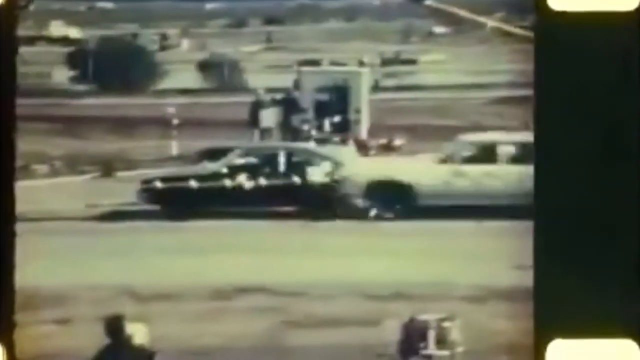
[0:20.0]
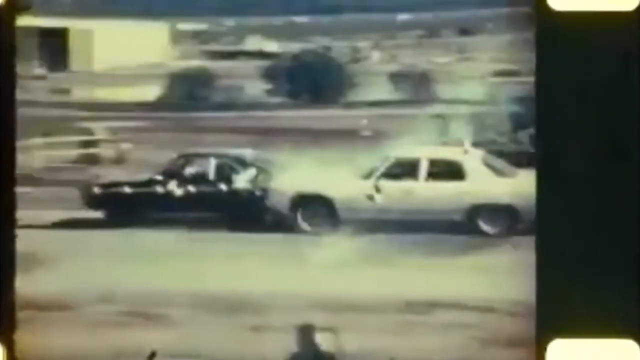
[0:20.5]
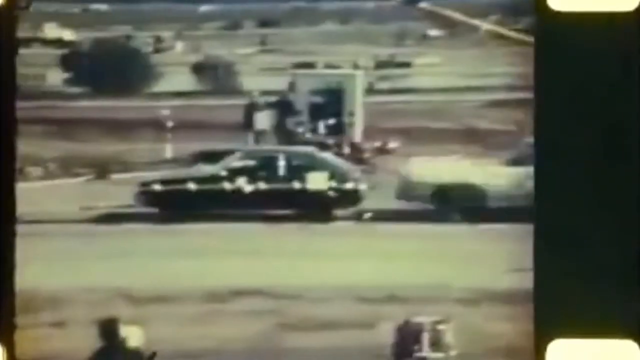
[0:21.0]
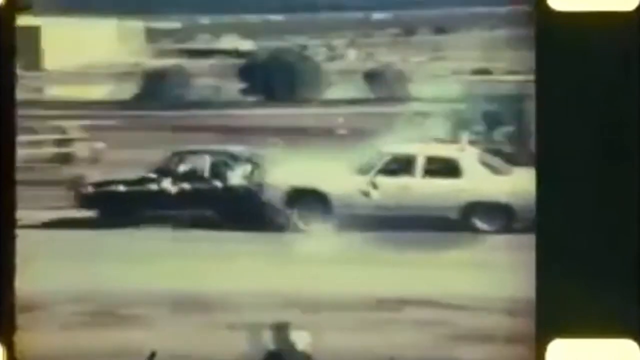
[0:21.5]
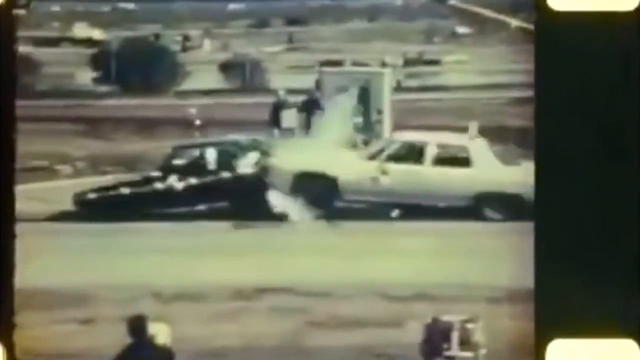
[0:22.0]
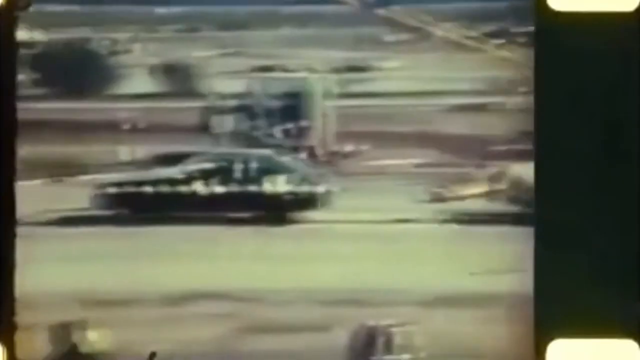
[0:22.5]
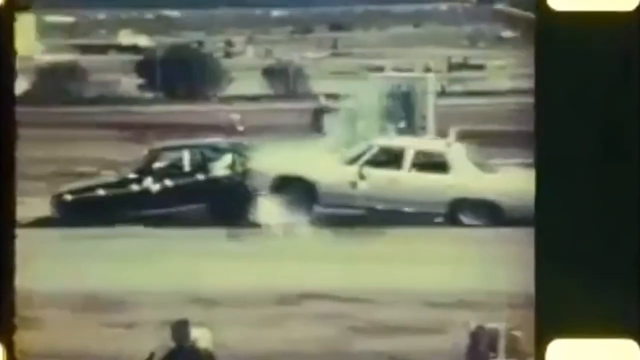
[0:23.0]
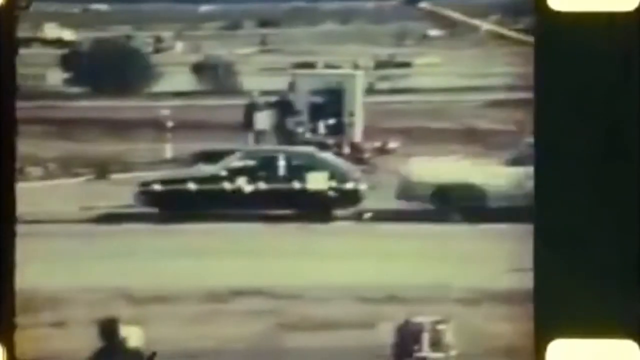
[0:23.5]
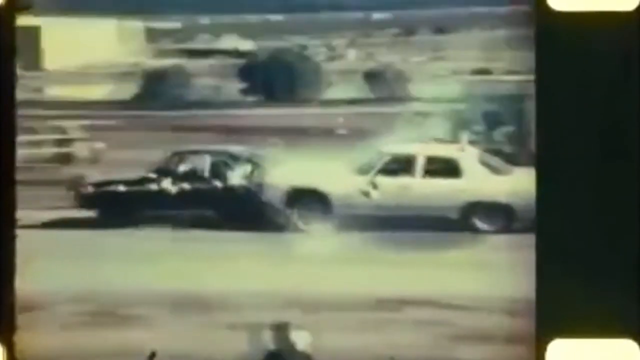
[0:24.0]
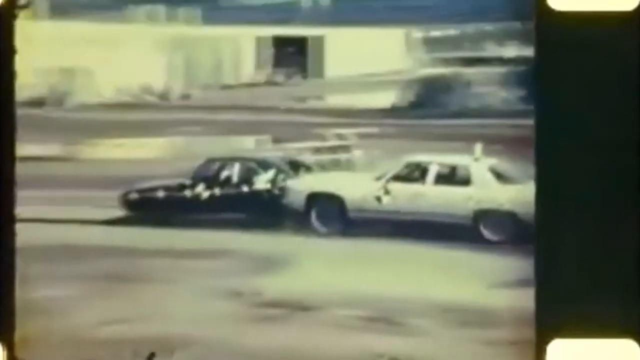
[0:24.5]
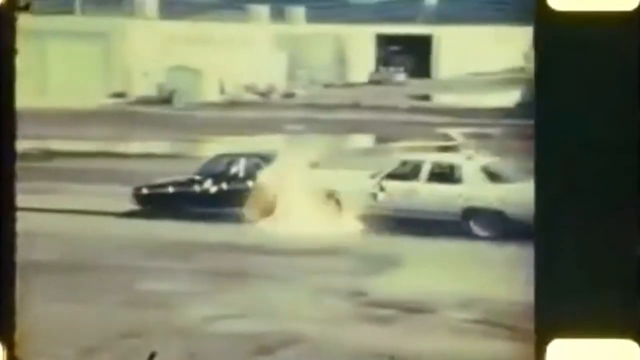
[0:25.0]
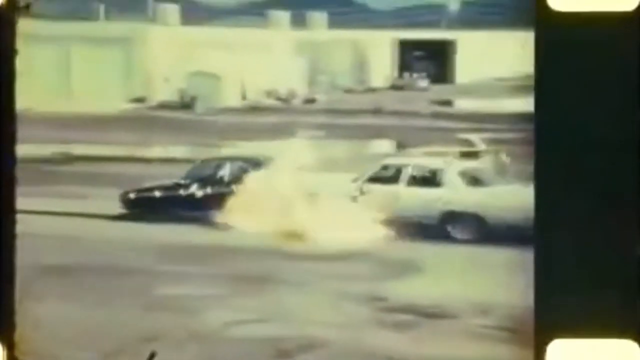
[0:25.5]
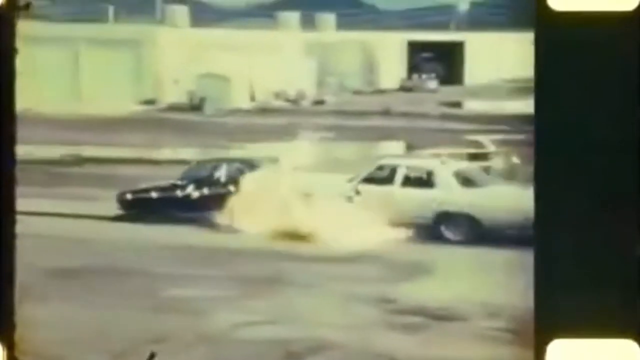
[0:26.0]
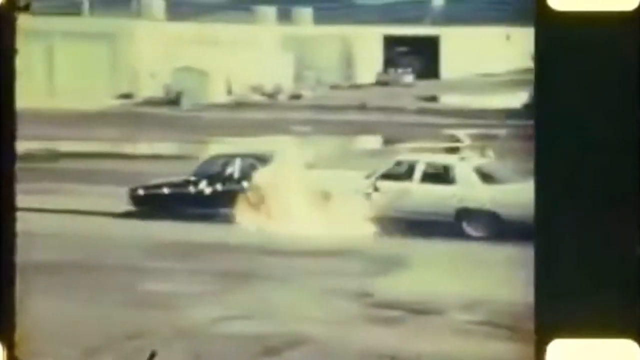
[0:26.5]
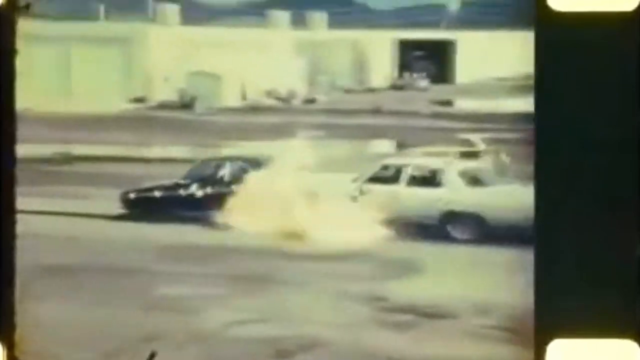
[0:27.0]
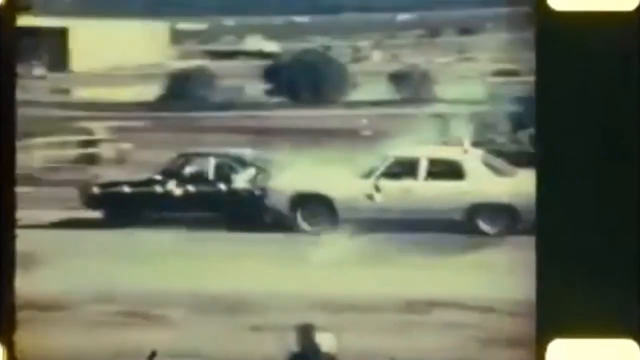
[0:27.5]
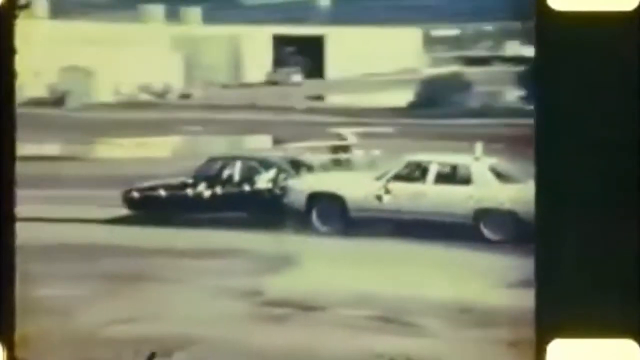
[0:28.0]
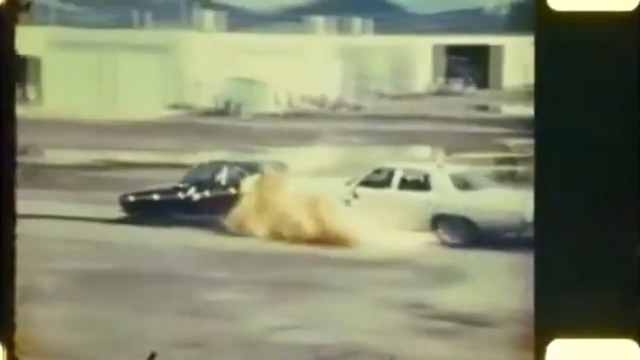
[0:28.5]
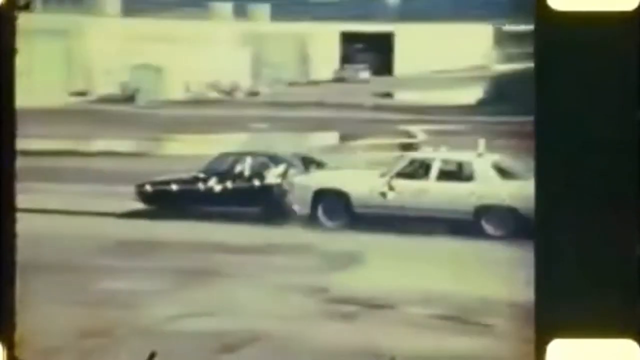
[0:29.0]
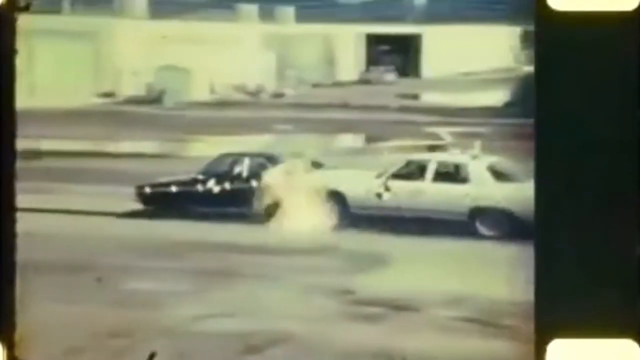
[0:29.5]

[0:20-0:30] The white car smashes into the rear end of the parked black car, which has no one inside. The impact is so forceful that it pushes the black vehicle several feet ahead down the street, and what appears to be smoke or fire and flames burst out of its back end as it is pushed. In the background there appears to be a small white booth with a door on the front, possibly with a worker inside, and beyond it a large field of grass with sporadic shrubbery planted throughout. The image is very blurry, and it is unclear whether a man or a woman is driving the white or light-colored vehicle.